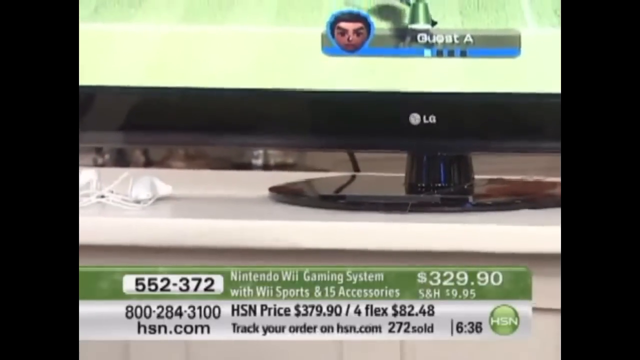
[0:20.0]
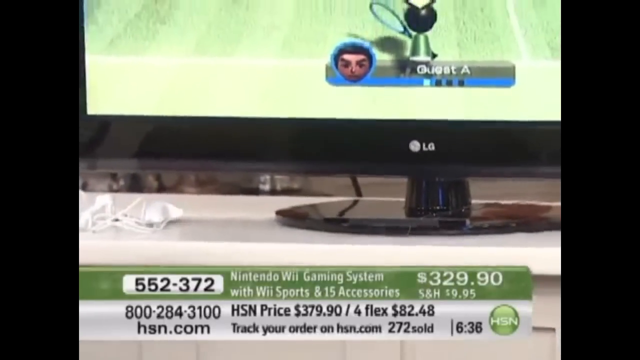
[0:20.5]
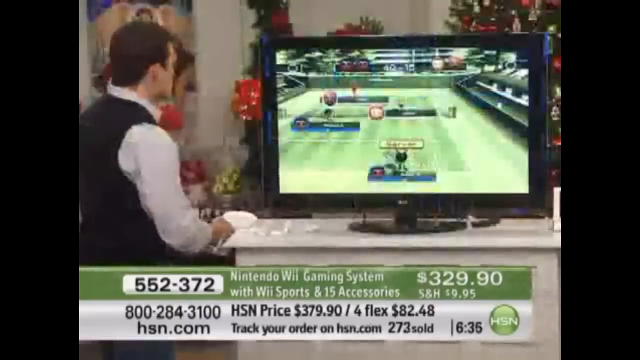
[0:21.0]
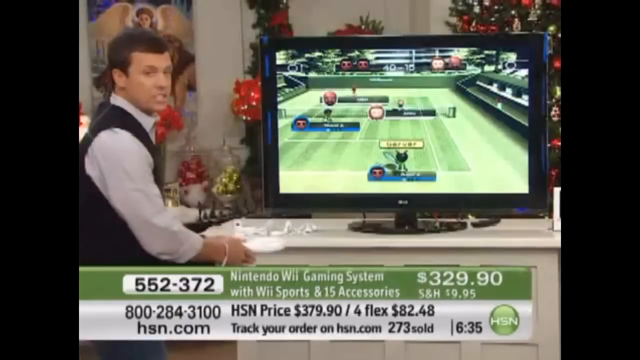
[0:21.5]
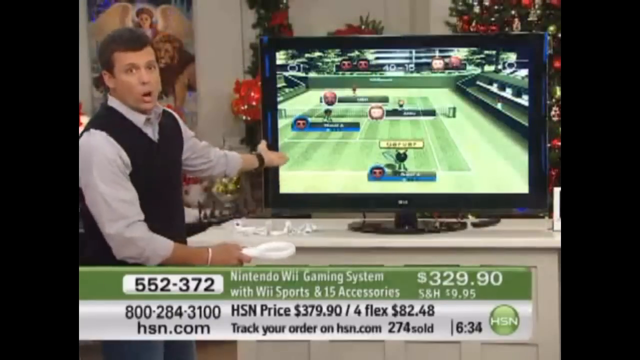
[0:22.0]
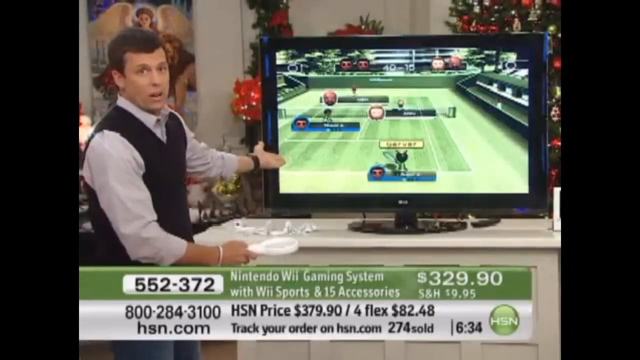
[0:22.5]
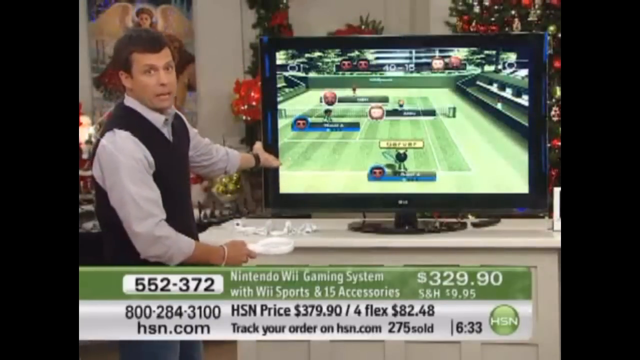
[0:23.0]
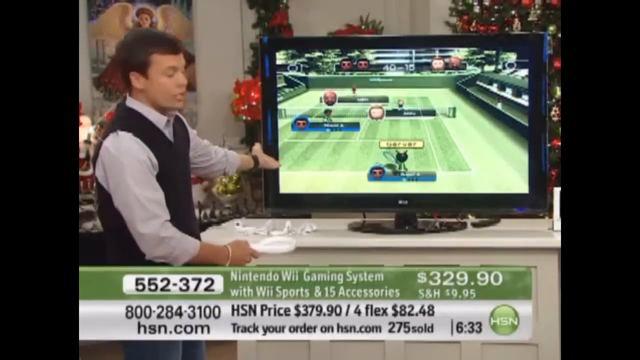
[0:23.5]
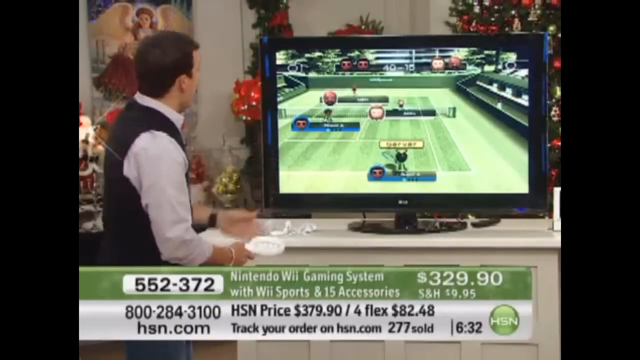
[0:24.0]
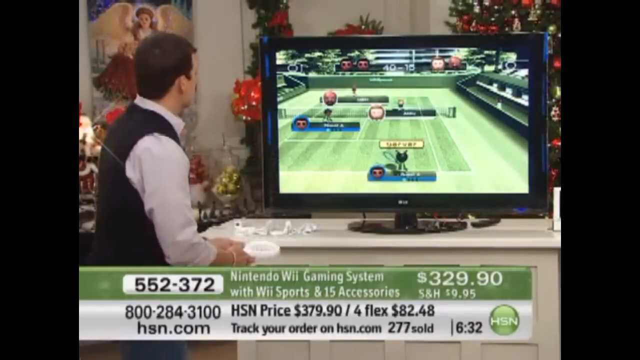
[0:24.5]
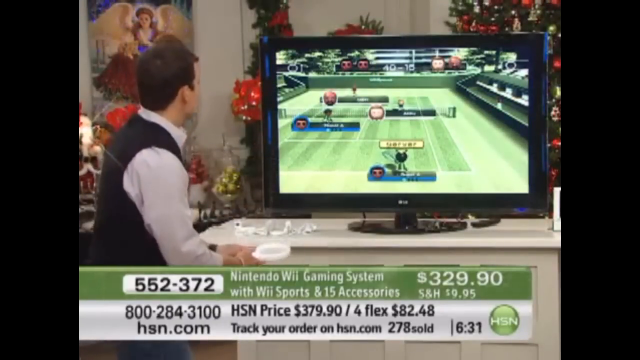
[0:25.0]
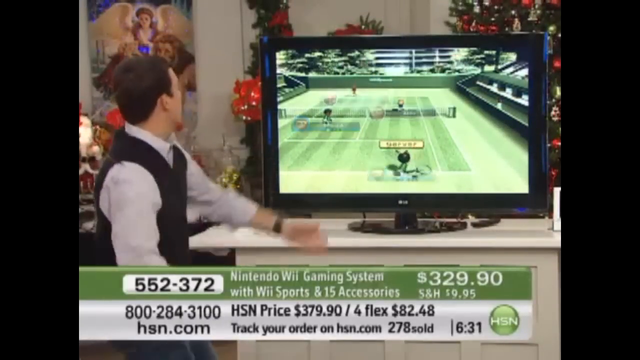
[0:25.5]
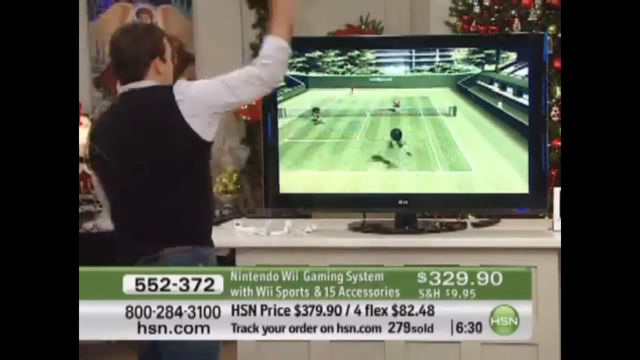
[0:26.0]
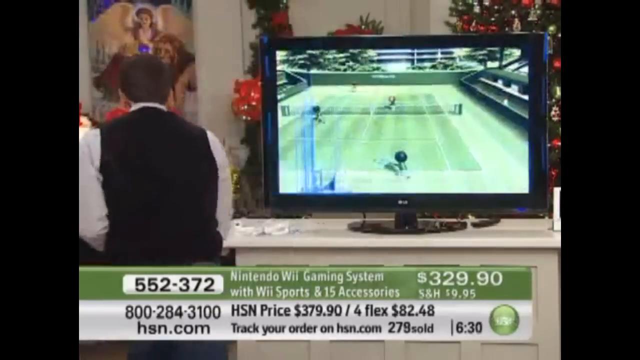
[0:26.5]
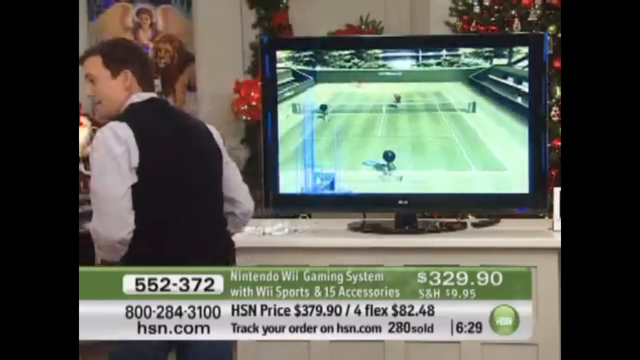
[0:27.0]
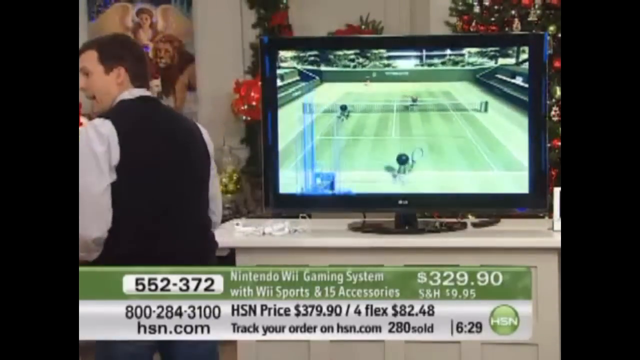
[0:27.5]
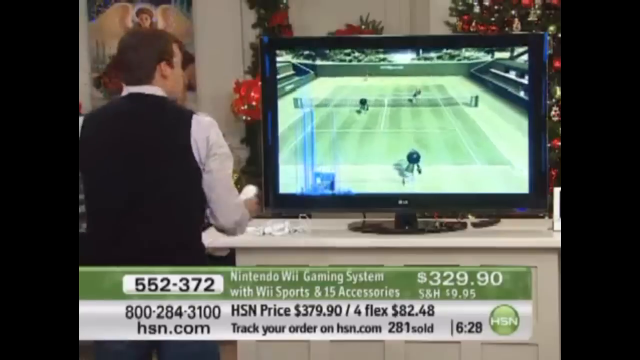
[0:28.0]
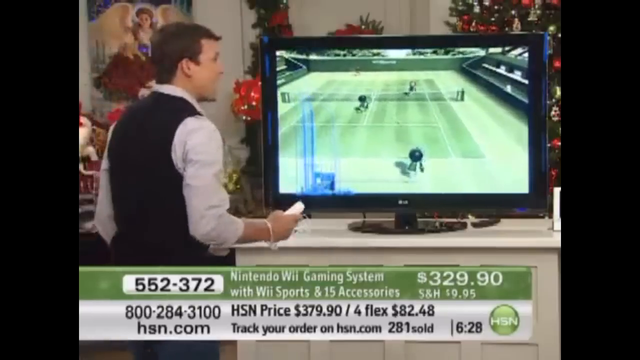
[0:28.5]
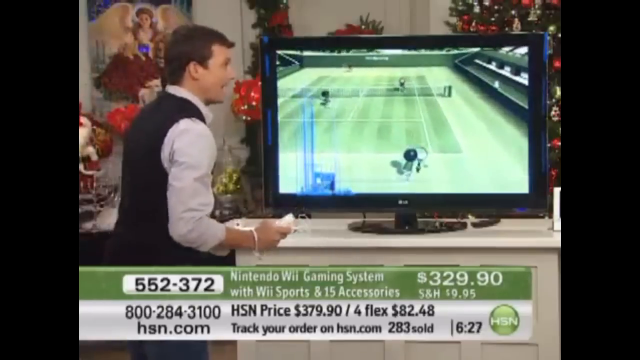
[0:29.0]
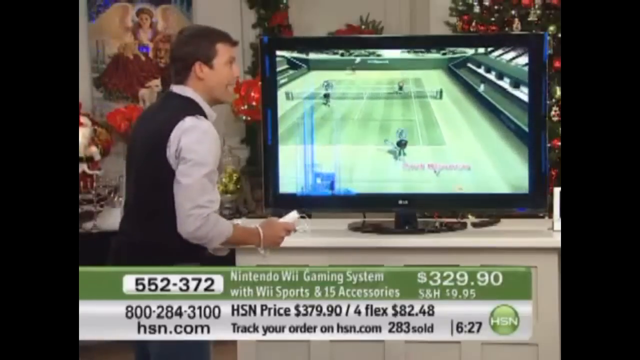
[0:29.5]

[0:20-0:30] In this Home Shopping Network presentation, a Wii gaming system with Wii Sports and 15 accessories is being sold for $329.90. A male presenter stands in front of a large screen television showing the Wii Sports game interface, where what looks like a tennis game is being played. He holds an instrument in his right hand that looks like a small white tennis racket, and while looking at the screen he moves it as one would an actual tennis racket hitting a ball. His avatar on the screen makes the same motion. When he is done, he turns to the camera and smiles.